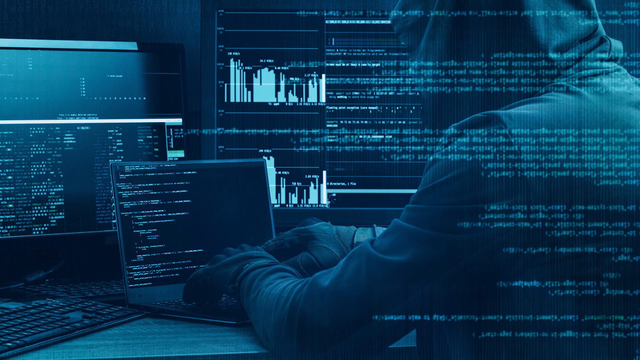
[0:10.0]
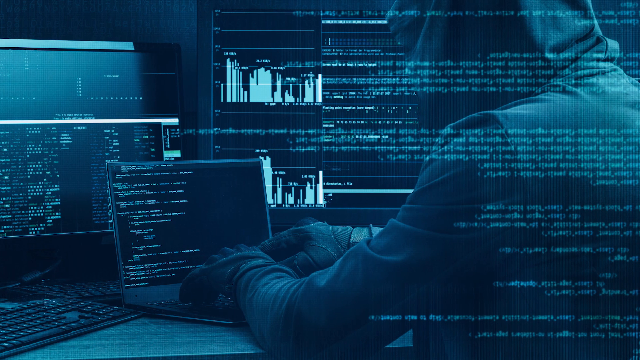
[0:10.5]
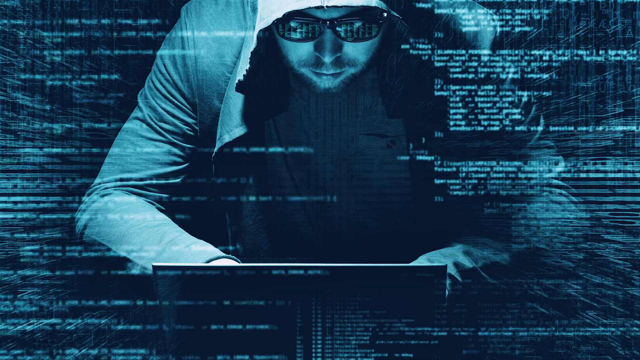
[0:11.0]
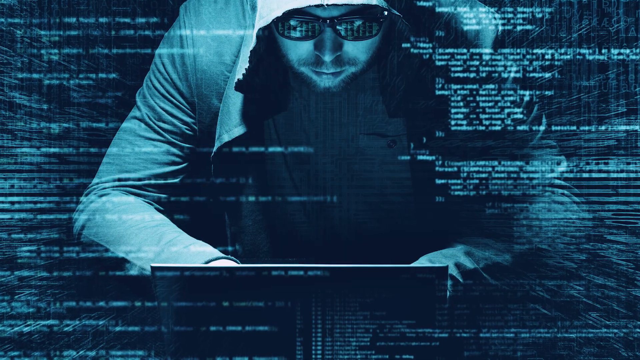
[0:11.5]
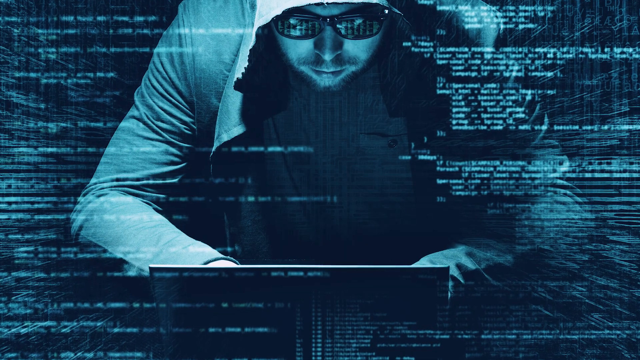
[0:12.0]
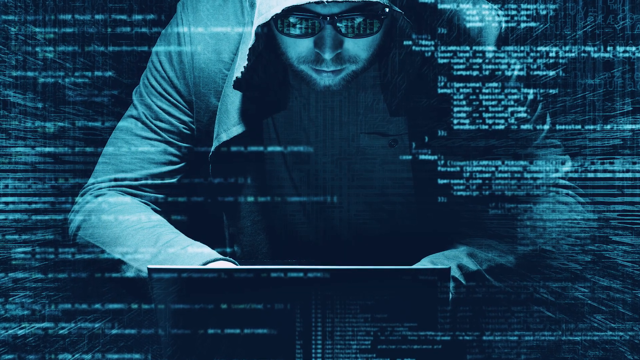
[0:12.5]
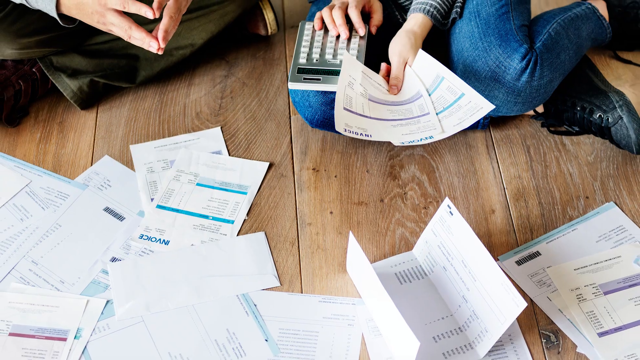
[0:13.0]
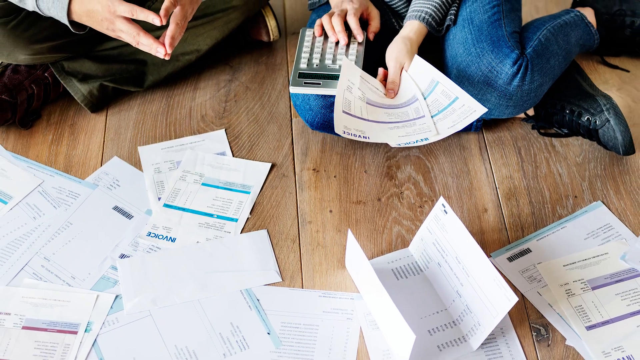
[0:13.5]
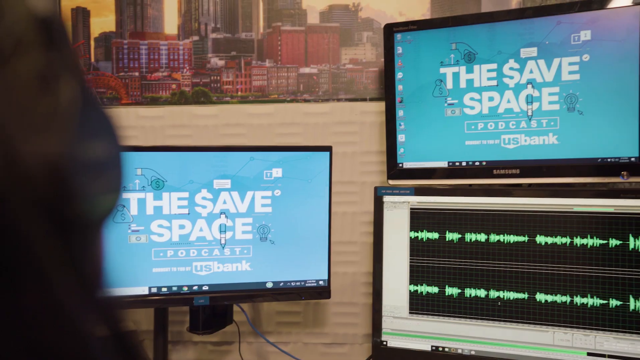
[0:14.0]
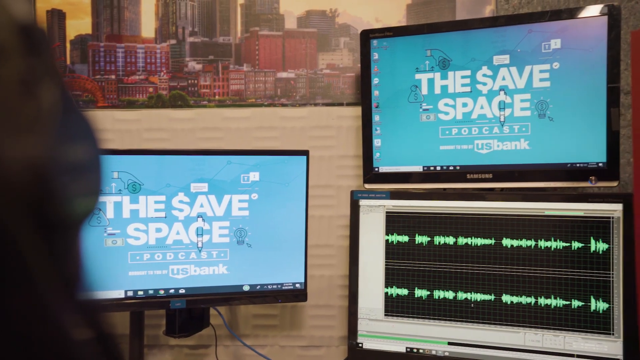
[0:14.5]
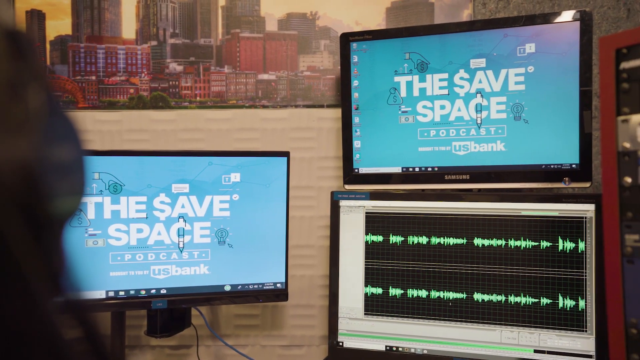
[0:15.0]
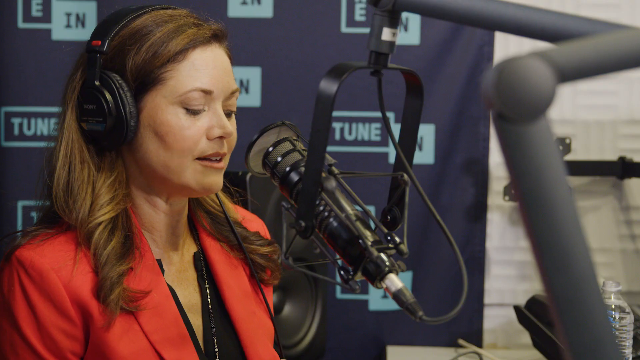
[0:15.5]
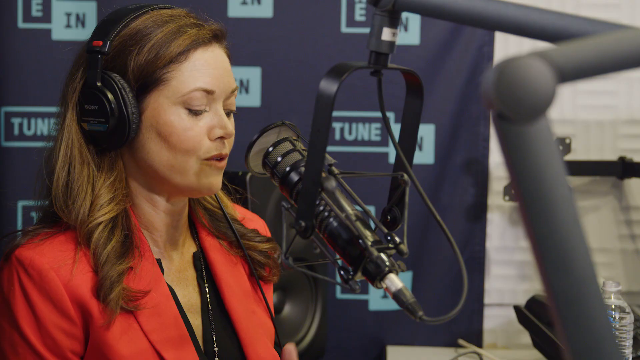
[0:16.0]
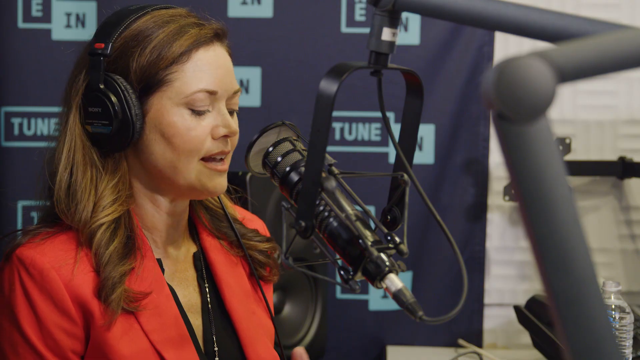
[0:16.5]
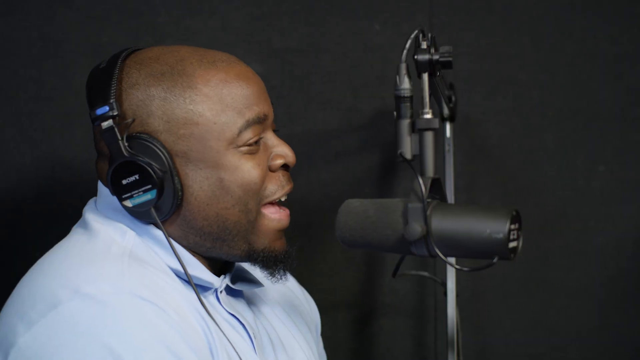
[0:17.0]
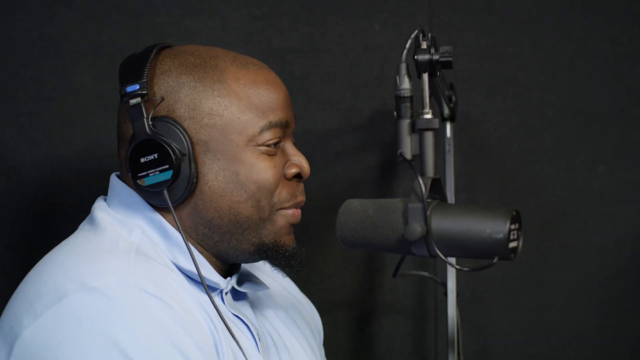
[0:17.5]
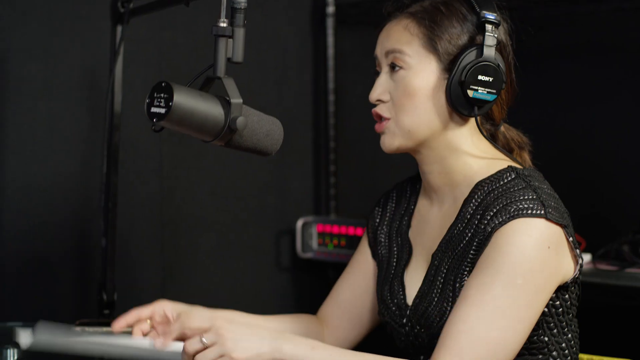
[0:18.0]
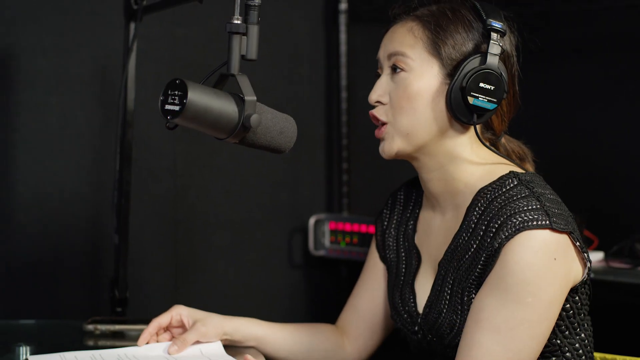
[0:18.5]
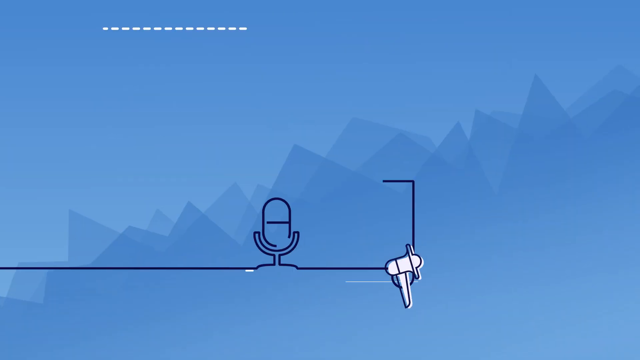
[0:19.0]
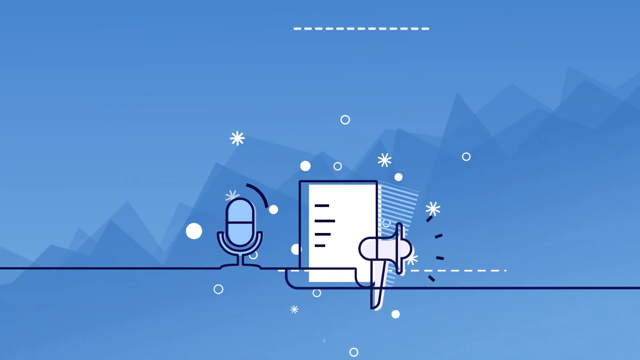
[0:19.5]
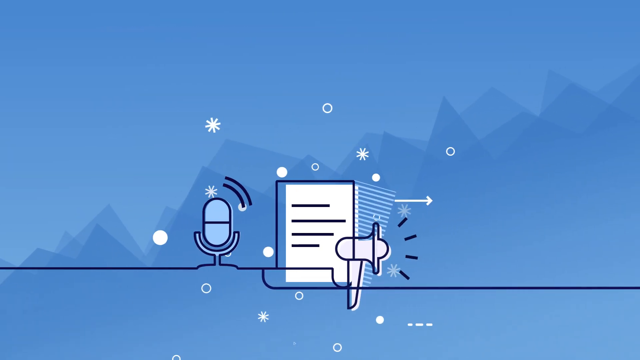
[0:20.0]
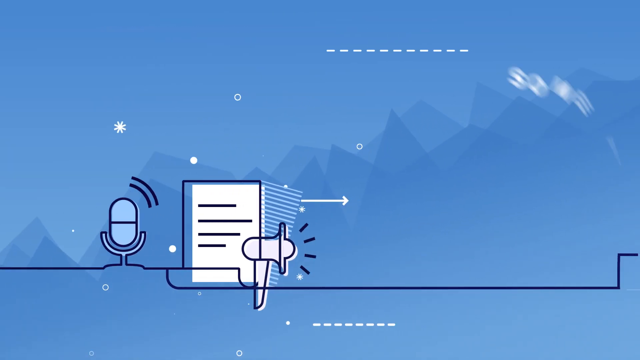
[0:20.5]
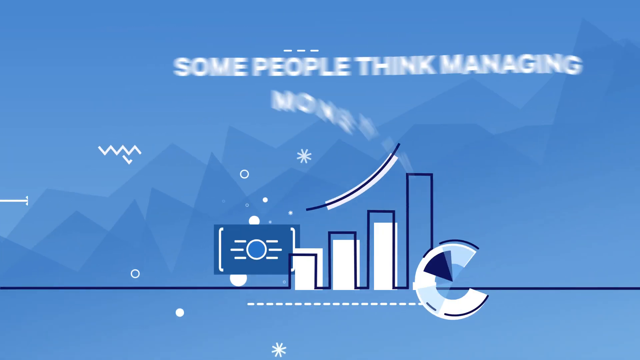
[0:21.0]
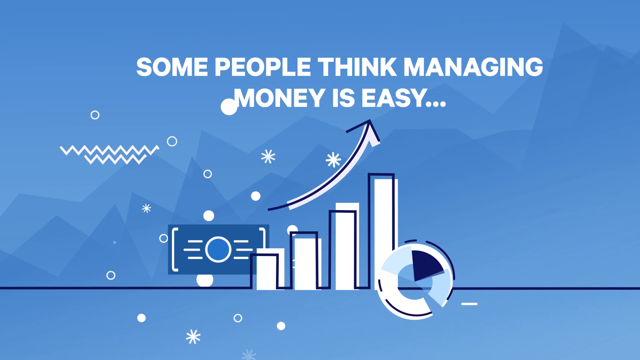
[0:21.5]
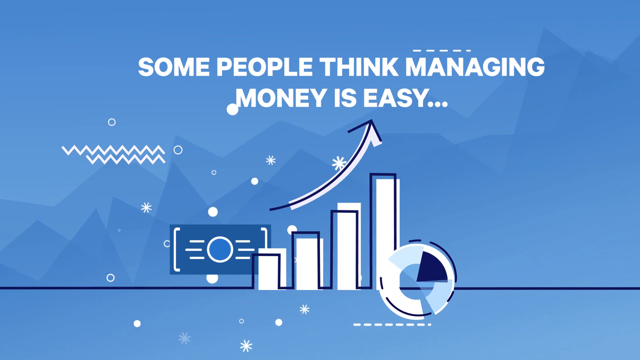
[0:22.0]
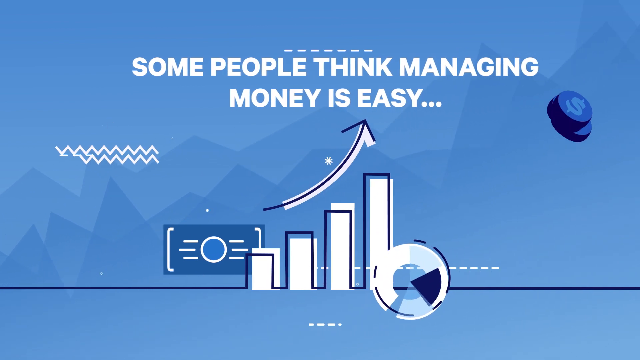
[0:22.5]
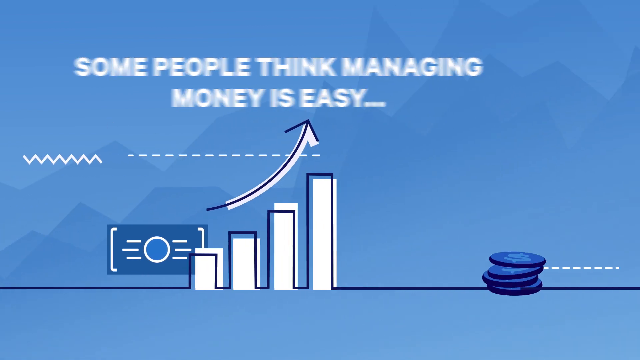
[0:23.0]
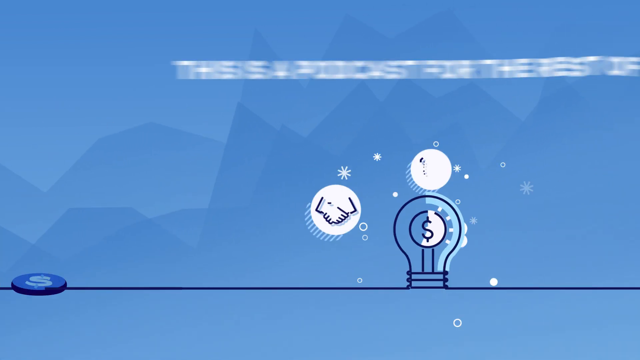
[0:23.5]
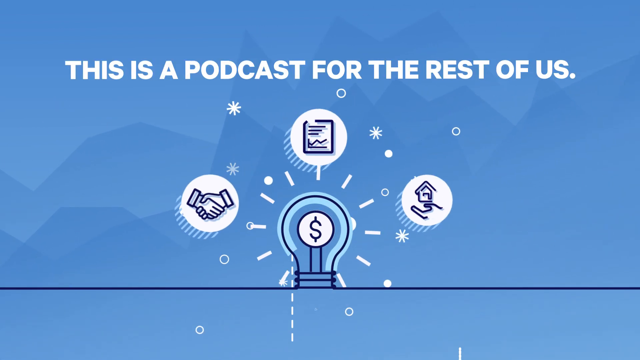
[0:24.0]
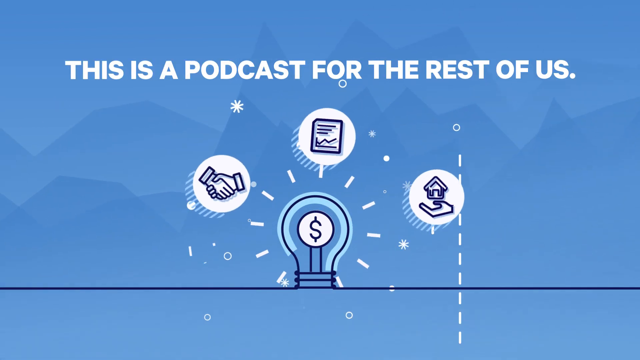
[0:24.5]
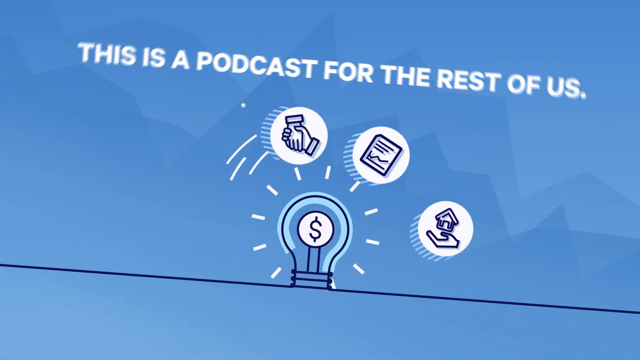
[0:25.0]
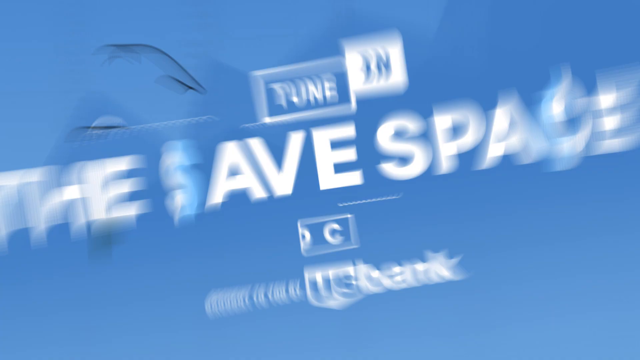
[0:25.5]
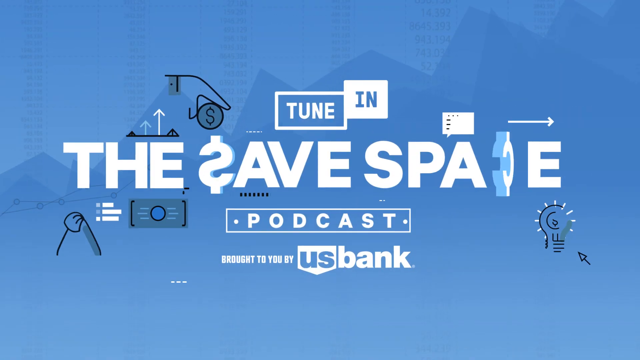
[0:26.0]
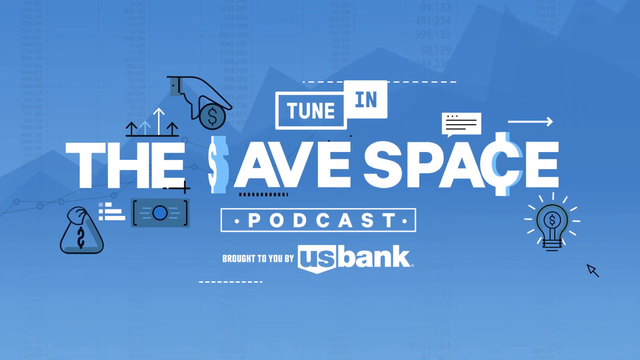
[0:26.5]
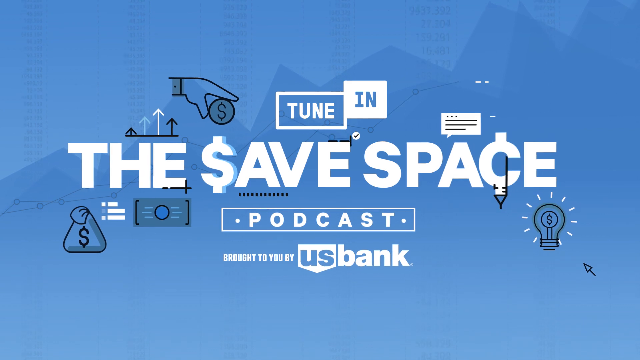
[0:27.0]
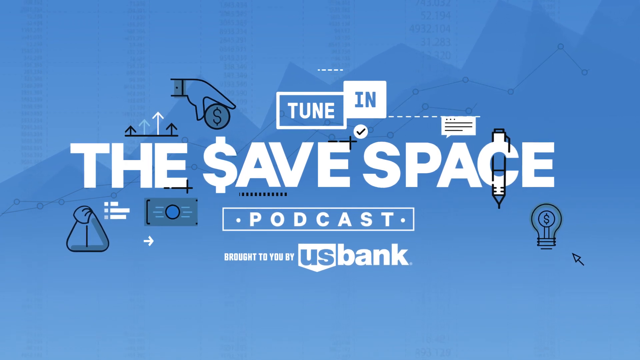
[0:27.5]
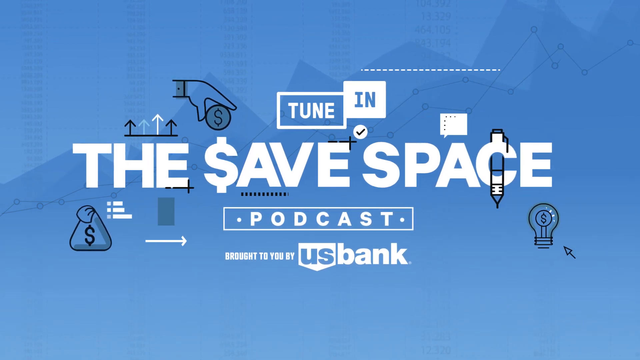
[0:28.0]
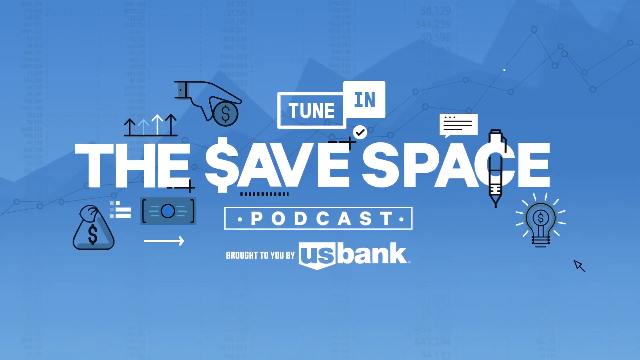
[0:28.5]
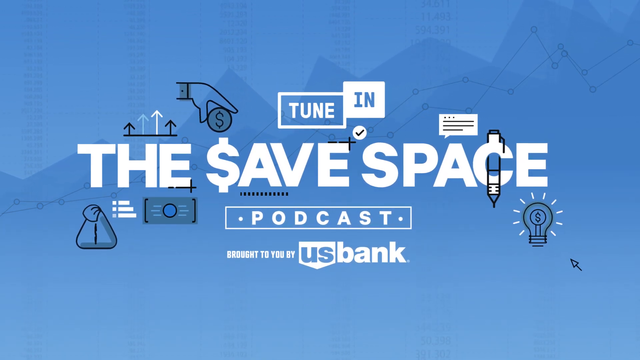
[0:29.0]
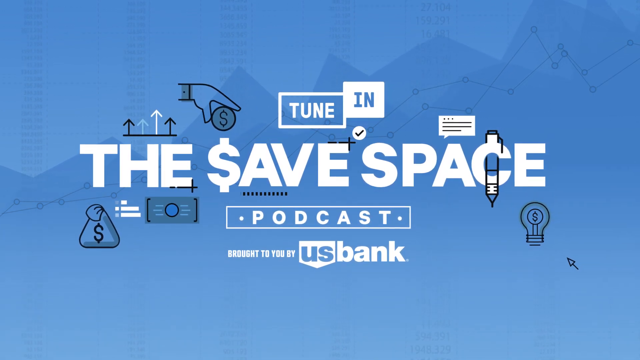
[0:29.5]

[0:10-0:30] Three computer screens are visible: a large monitor in the upper right corner, a medium-sized monitor on the left, and a small laptop computer sitting on top of the desk. A person is working on the laptop and looks like they are up to no good: a black mask covers their entire face, they wear black gloves while typing on the laptop's keyboard, and they have on a long-sleeved black jacket. The person appears to be a hacker. Next, a different person who also appears to be a hacker is shown from an overhead view; he wears a gray hoodie and black sunglasses and looks like he is typing on a laptop. Next, some people appear to be sitting on the floor inside their home; only the bottom half of the people is visible, not their faces or upper torsos. Finally, a screen shows "Tune In, the Safe Space podcast," brought by US Bank.